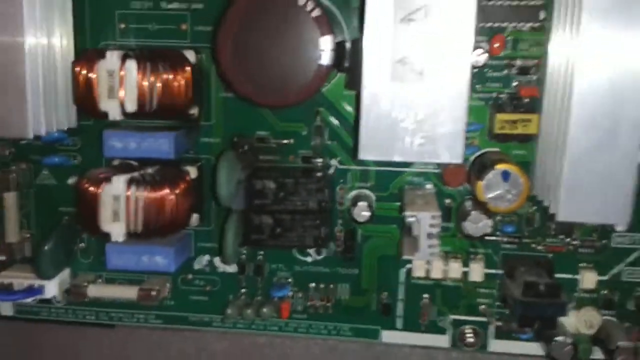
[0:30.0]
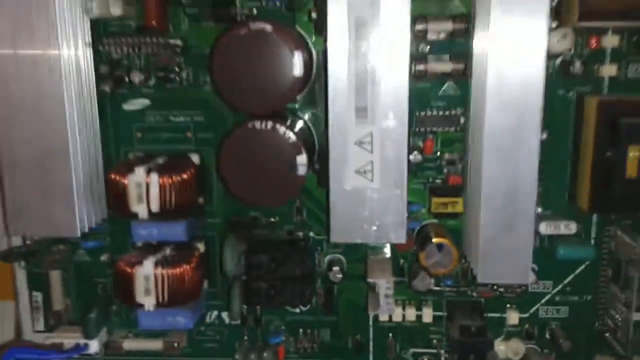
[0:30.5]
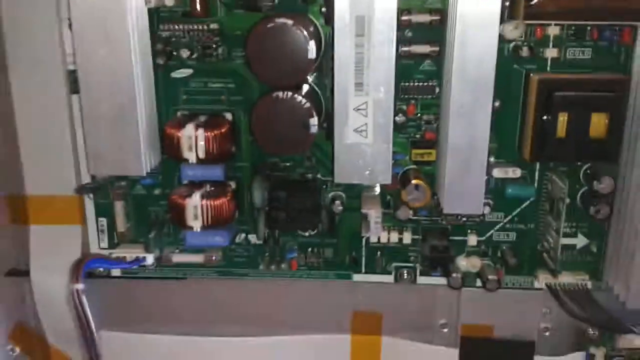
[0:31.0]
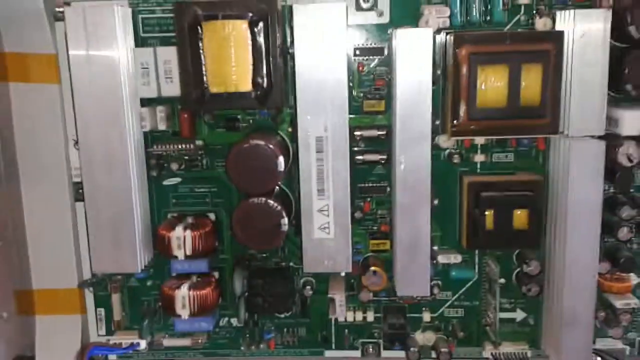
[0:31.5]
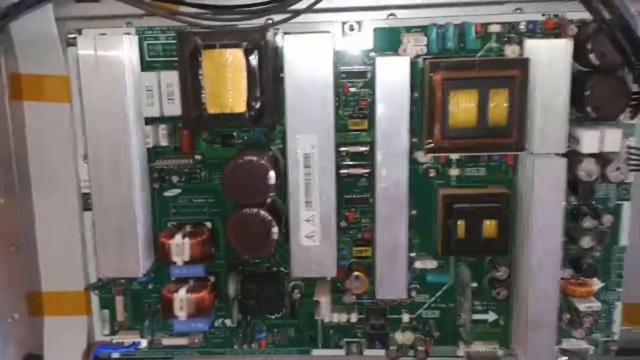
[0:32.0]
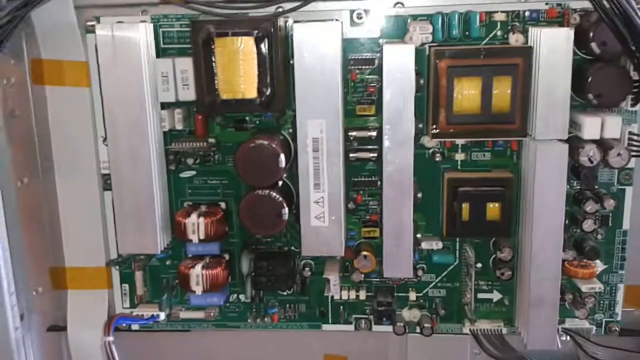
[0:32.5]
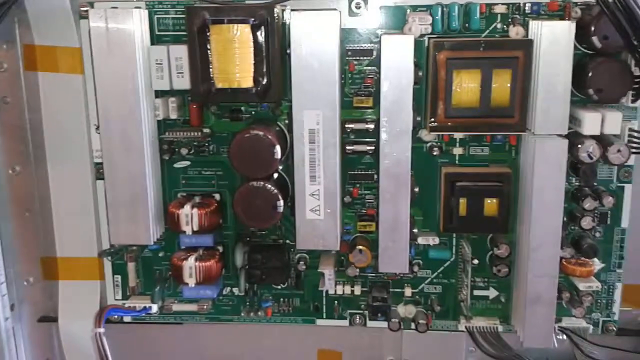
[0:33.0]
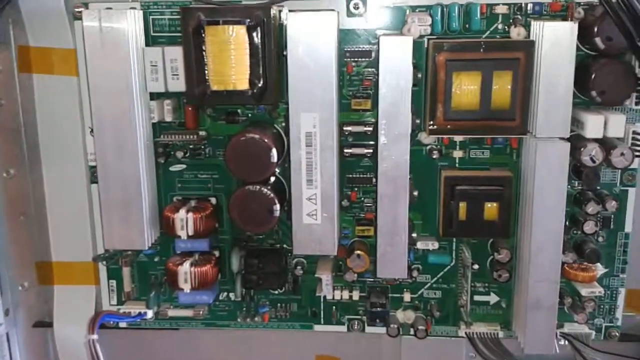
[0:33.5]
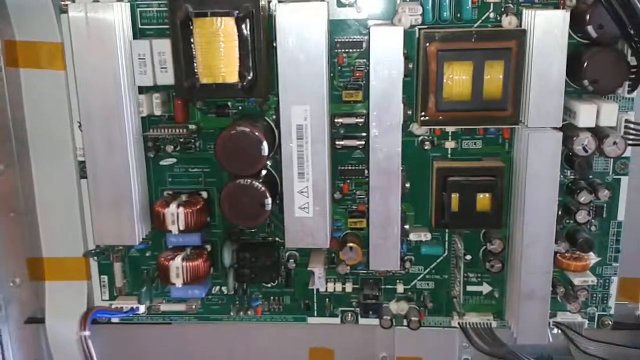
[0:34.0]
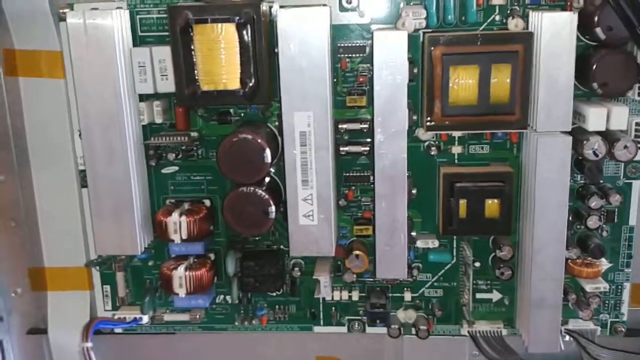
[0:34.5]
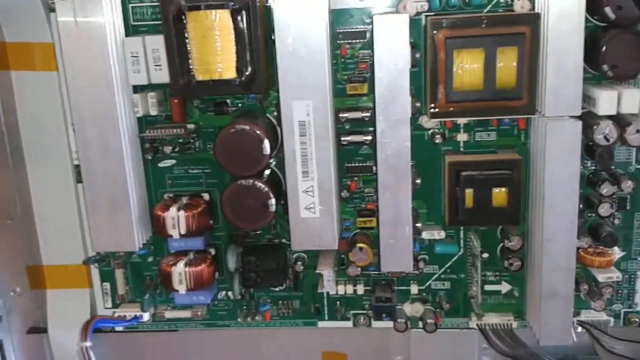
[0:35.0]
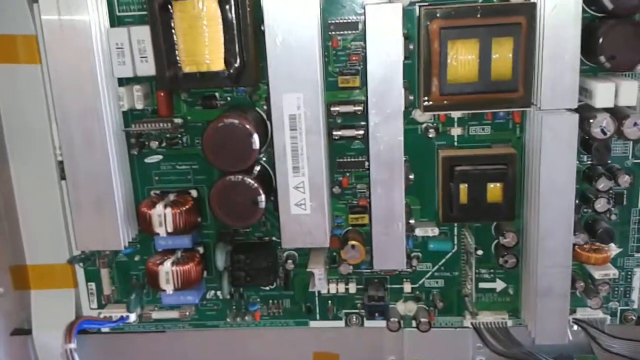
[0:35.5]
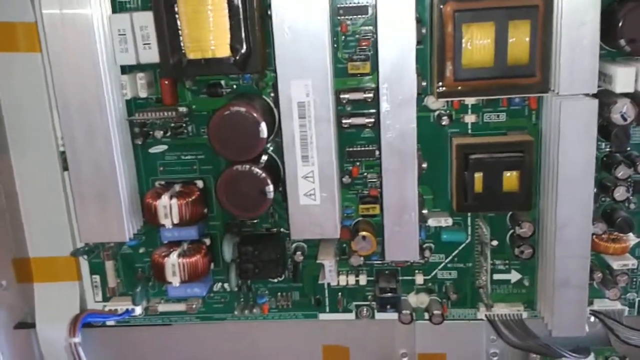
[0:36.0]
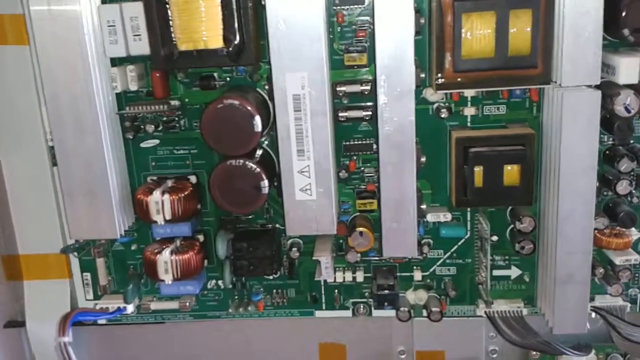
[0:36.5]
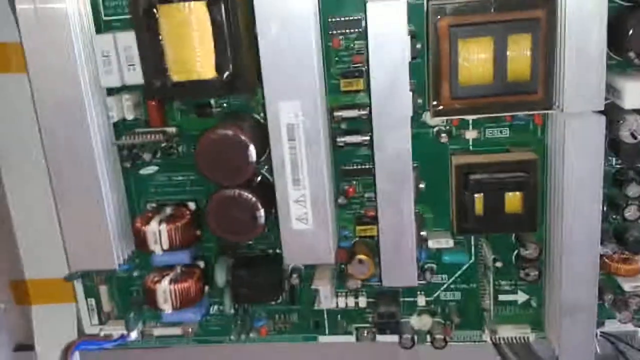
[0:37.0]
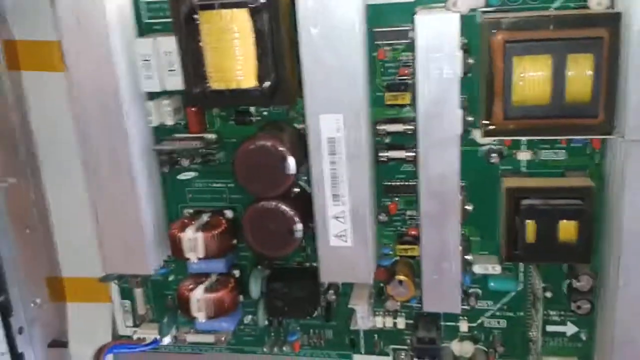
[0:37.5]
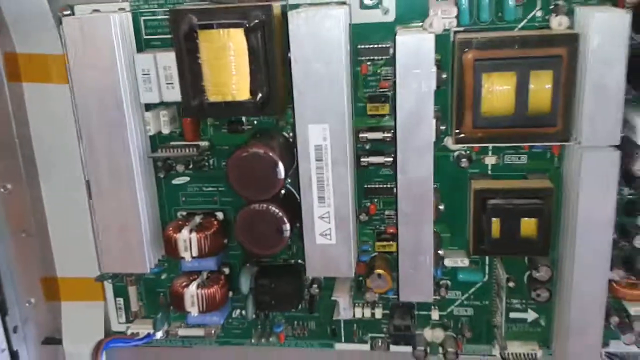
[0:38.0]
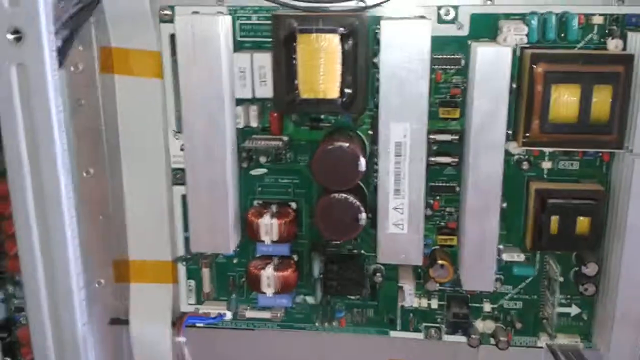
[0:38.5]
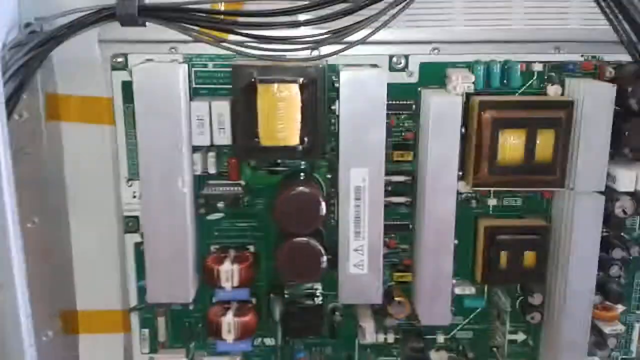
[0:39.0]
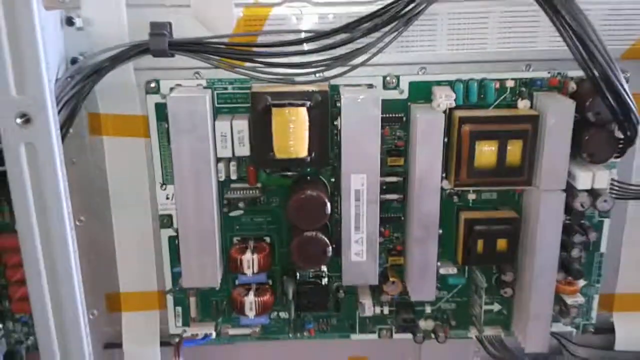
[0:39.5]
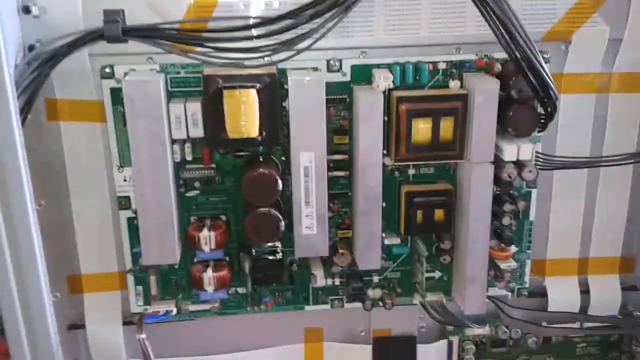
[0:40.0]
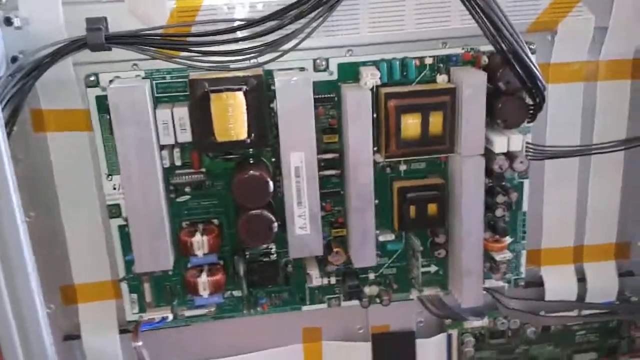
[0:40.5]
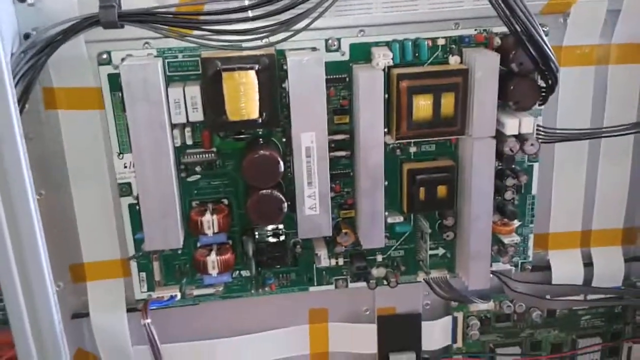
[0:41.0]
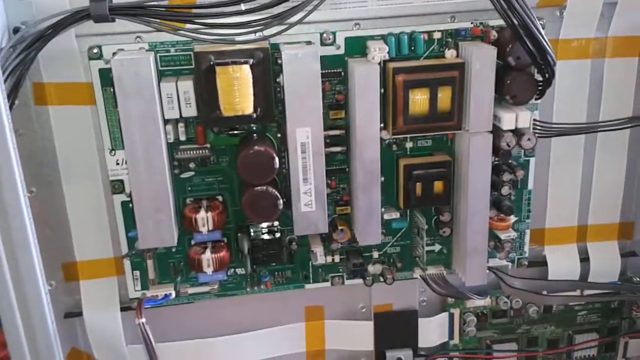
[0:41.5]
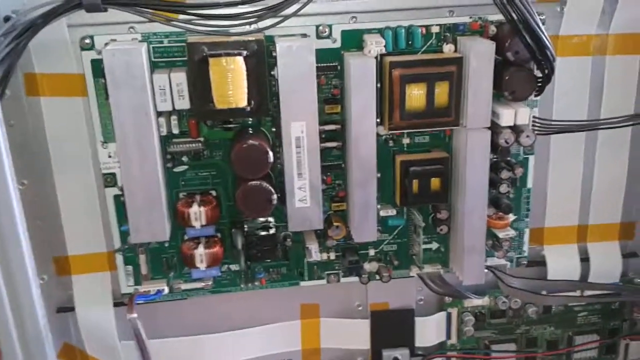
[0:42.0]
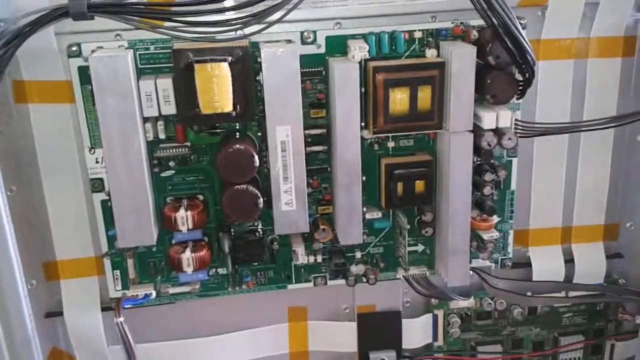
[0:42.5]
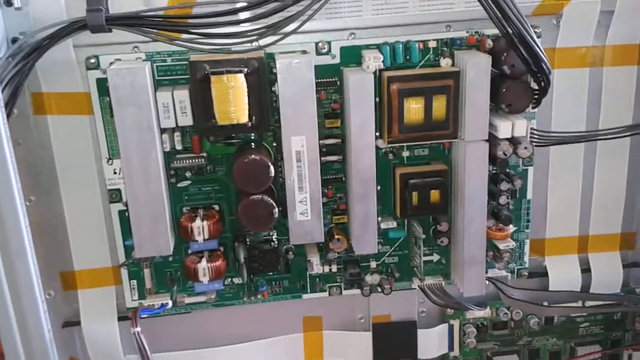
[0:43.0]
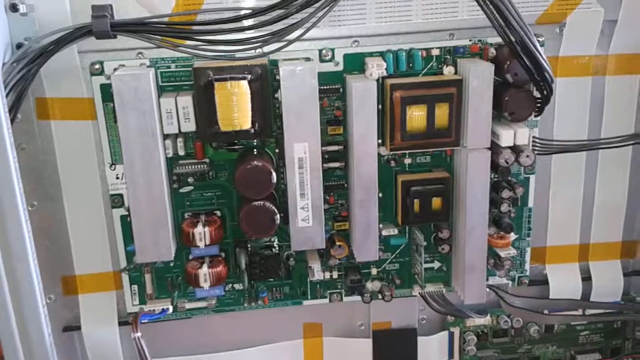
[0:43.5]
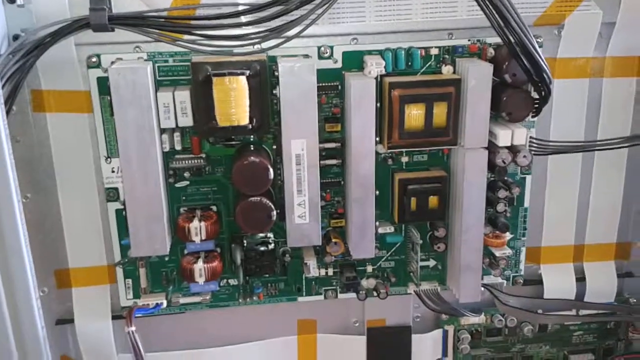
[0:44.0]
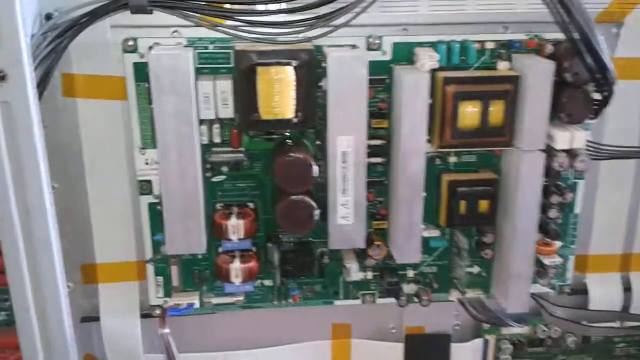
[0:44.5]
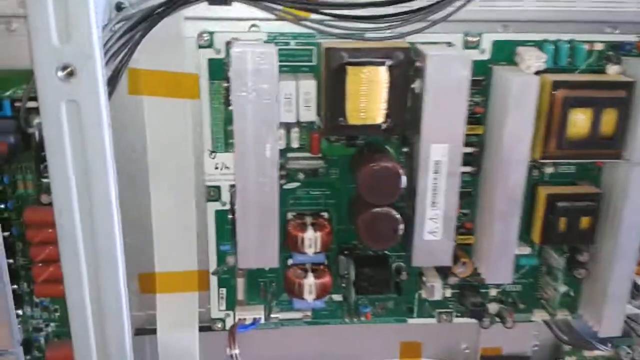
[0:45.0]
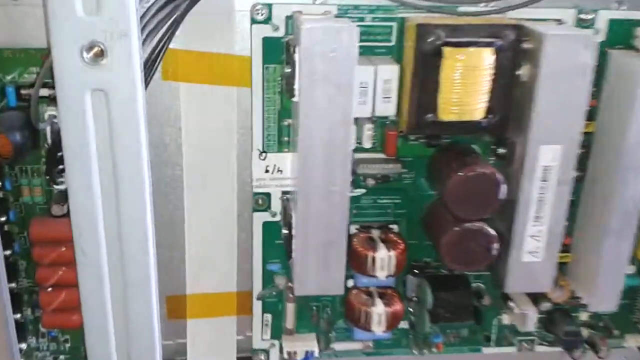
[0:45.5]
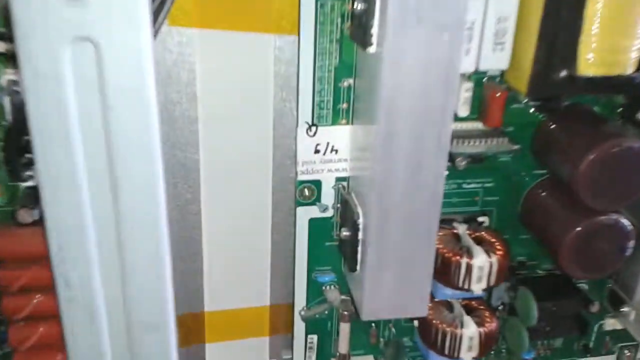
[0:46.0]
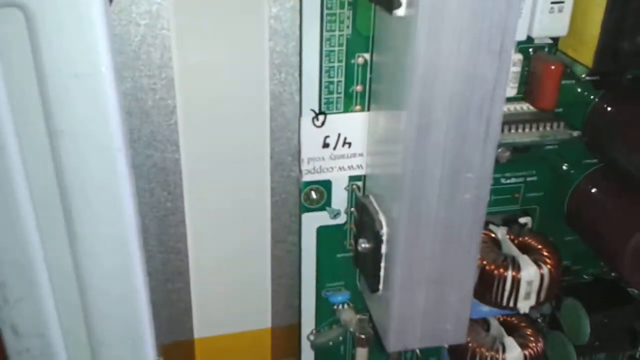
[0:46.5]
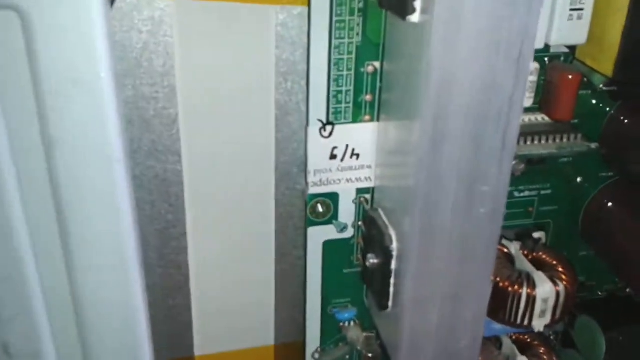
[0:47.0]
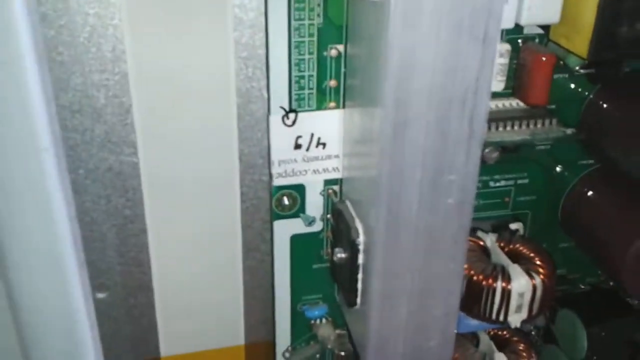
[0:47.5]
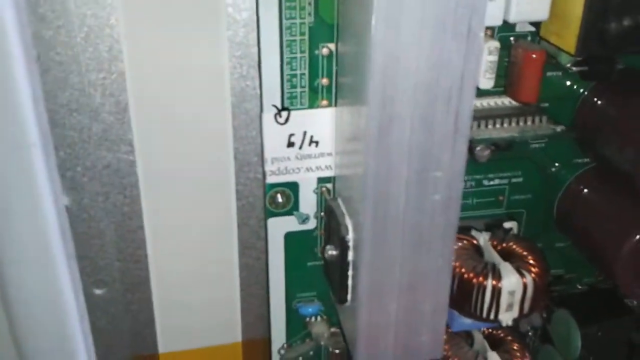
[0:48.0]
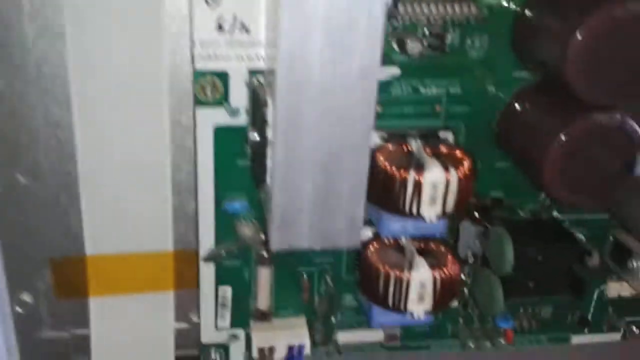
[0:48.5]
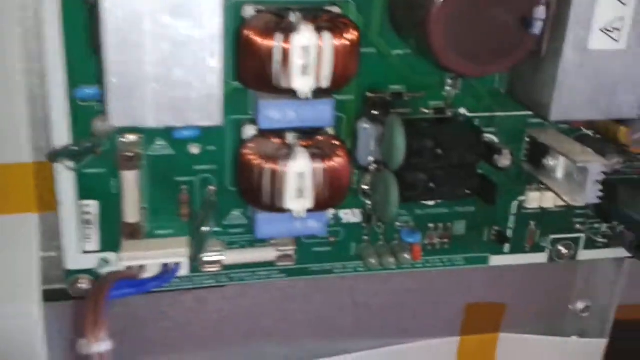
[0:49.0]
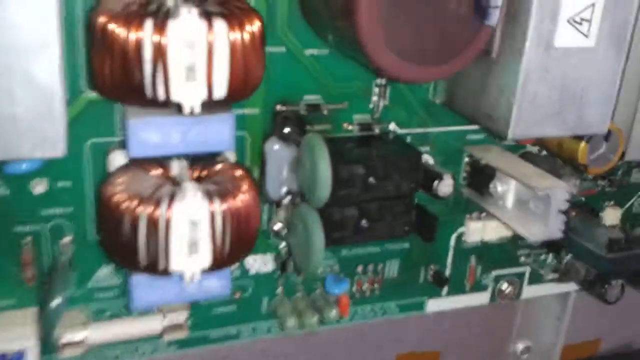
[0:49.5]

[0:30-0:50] A close-up shows a dark green circuit board with a few black resistors, some silver capacitors, and different colored diodes and chips placed in the board, along with integrated circuits and relay switches. Two white inductors each have copper wiring wrapped around them. From top to bottom there is an inductor, a diode underneath it, another inductor underneath that, and a blue diode underneath that. He then zooms out to show the whole circuit board with every piece visible. Black wiring is attached to the top right corner of the board and is held up by clips, going above the circuit board over to its other side.